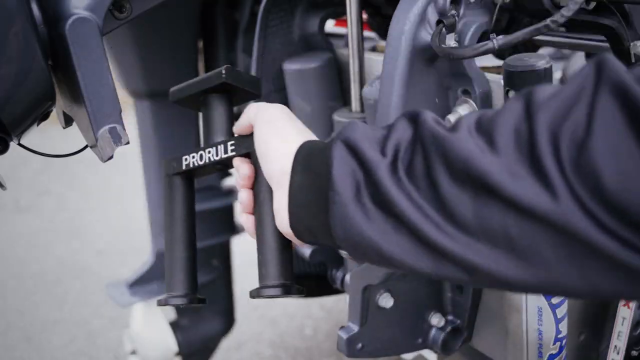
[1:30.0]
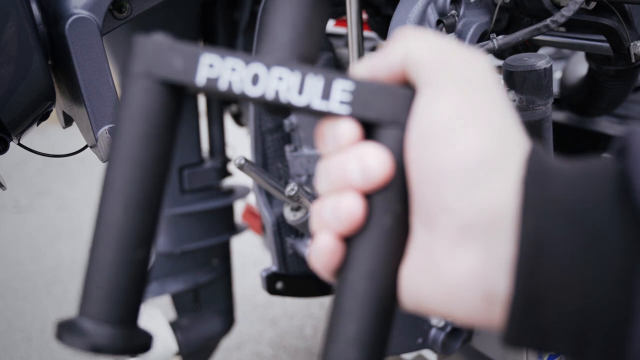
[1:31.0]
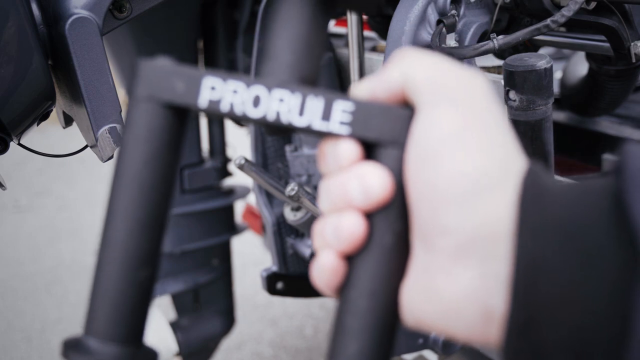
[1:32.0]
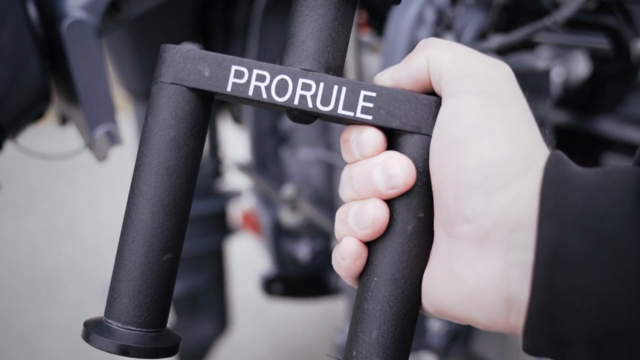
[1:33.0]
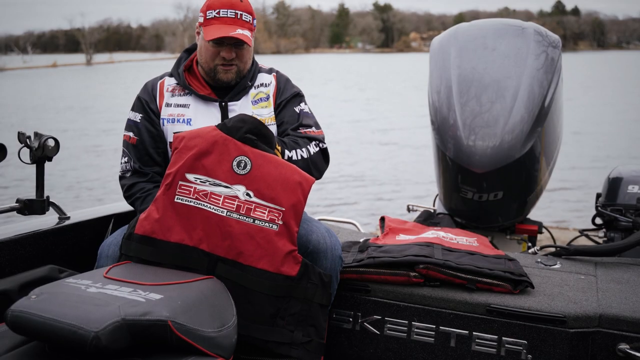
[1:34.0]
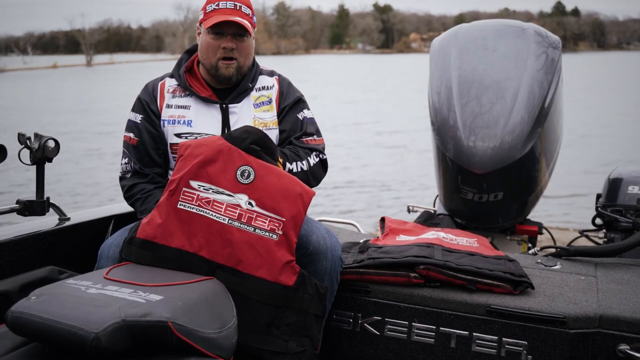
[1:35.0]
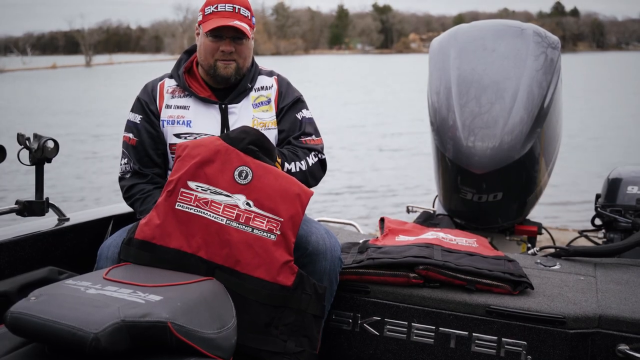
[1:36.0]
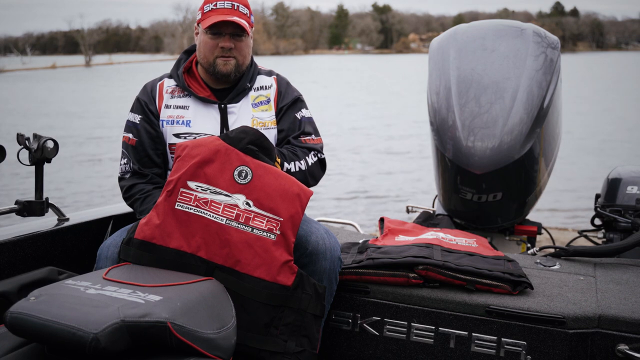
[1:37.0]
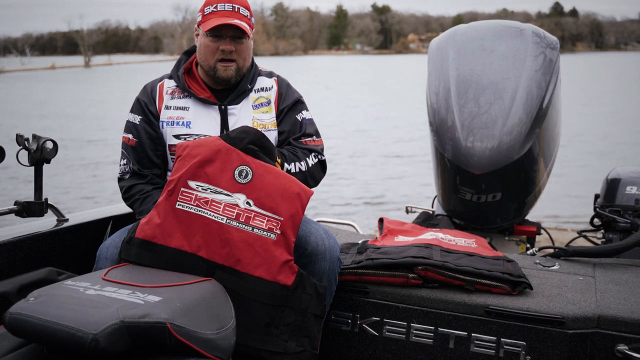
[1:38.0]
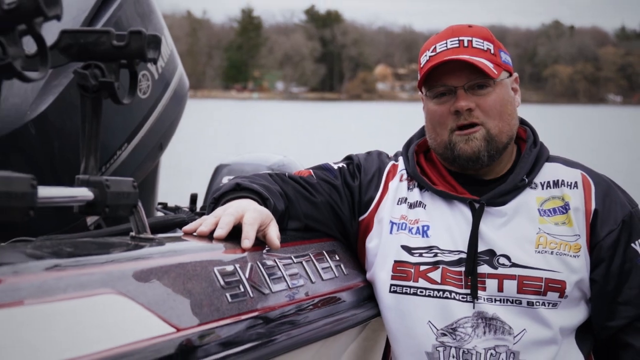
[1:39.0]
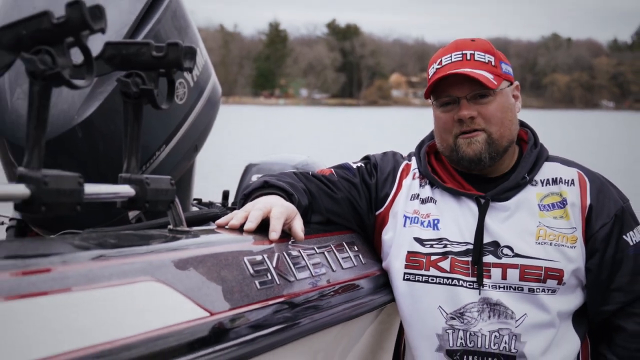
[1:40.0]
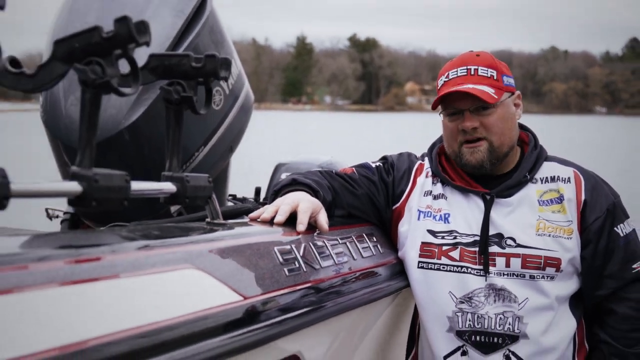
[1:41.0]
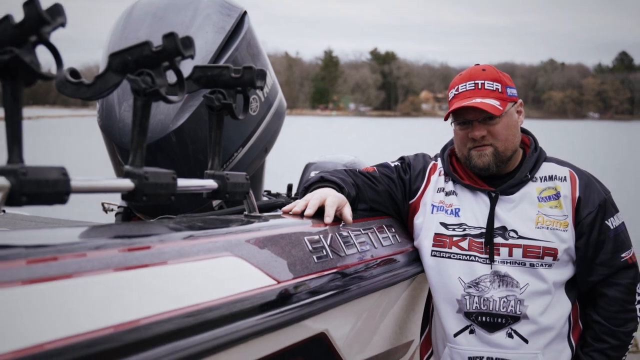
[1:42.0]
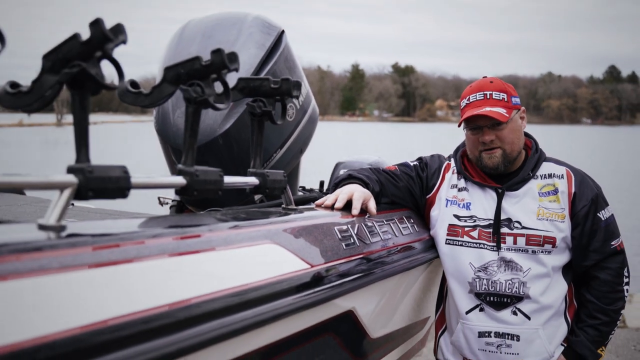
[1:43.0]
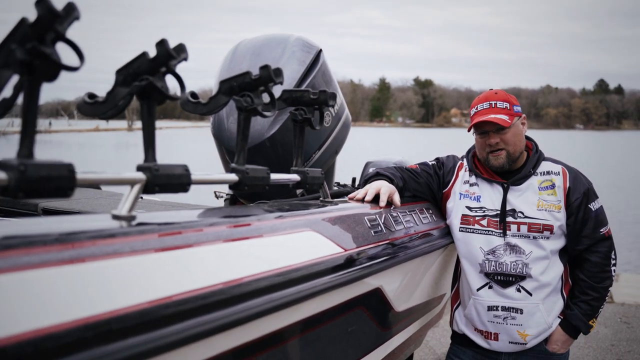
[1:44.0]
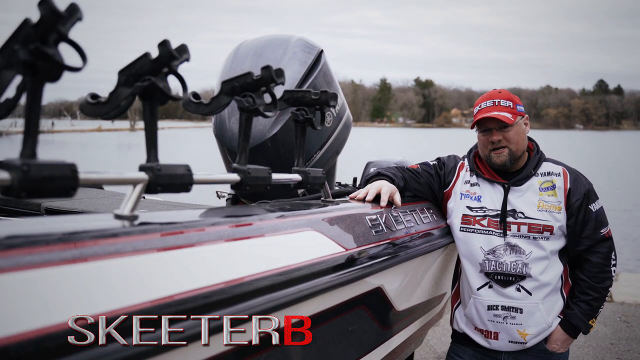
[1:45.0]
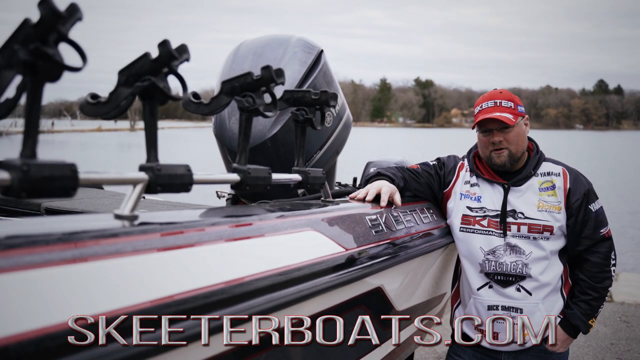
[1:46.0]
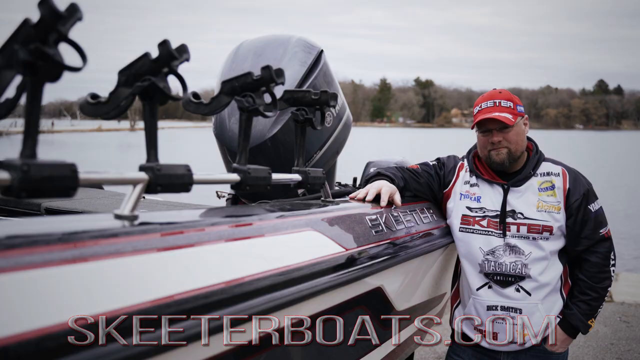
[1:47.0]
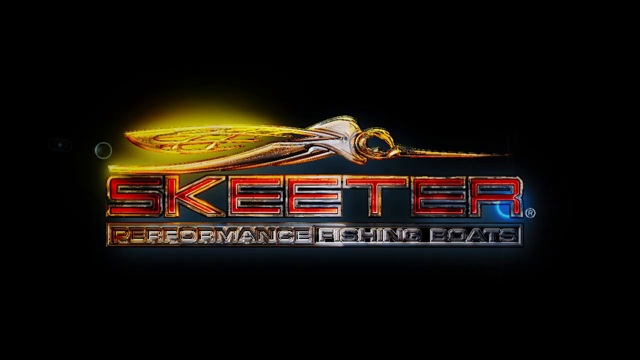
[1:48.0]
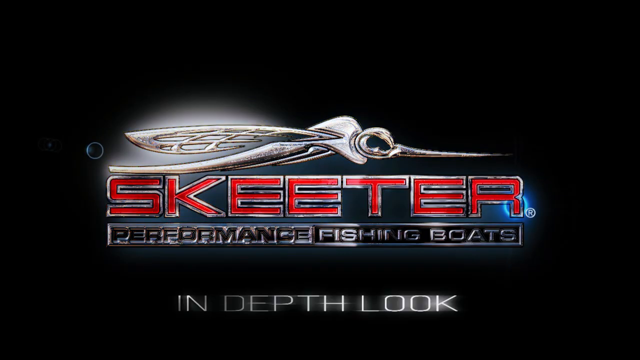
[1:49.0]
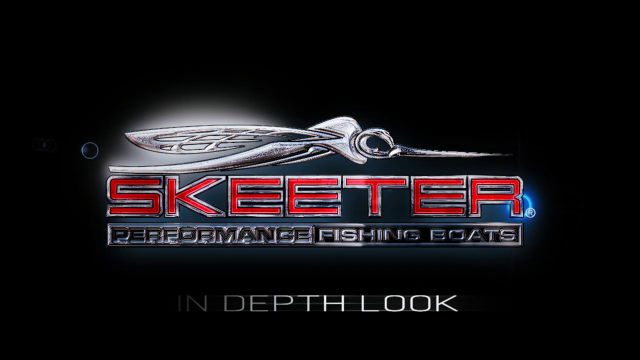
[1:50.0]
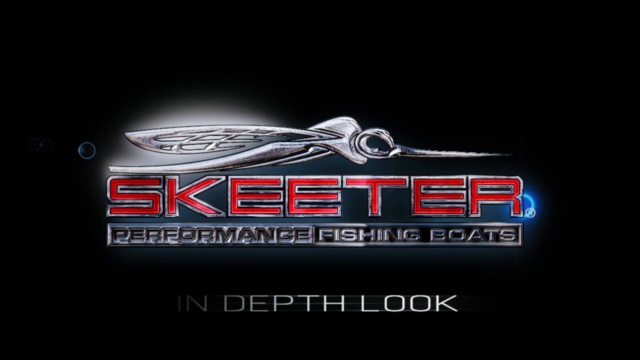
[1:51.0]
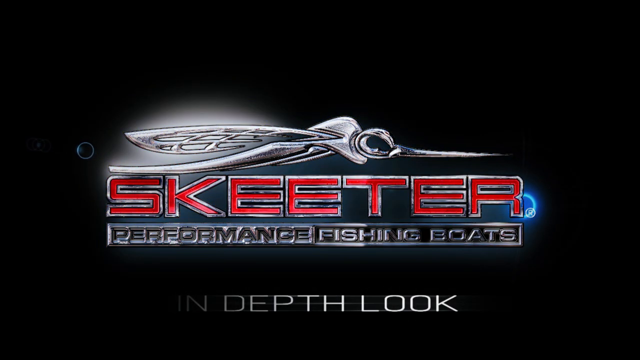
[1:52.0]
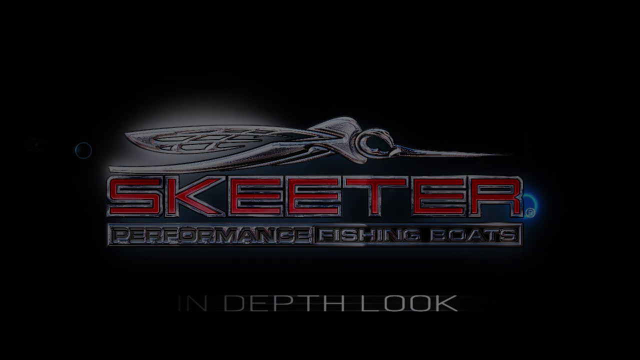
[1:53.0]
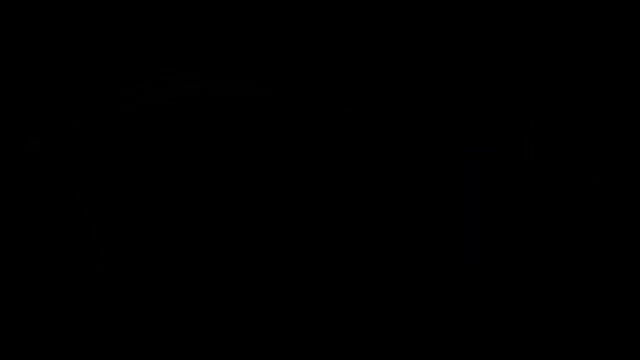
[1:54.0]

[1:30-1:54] The man has taken the ProRule bar, which held the motor in place, off the back of the boat. He sits inside the boat holding a life vest with Skeeter branding on the back. He then stands next to the boat, which has the Skeeter brand on its side, wearing clothing with Skeeter branding all over it, and talks to the camera as the camera kind of pulls back into a wider shot. Behind him is the lake. At the very end, the Skeeter logo appears again with a mosquito mascot on top, "Performance Fishing Boats" underneath it, and "In-Depth Look" below that.